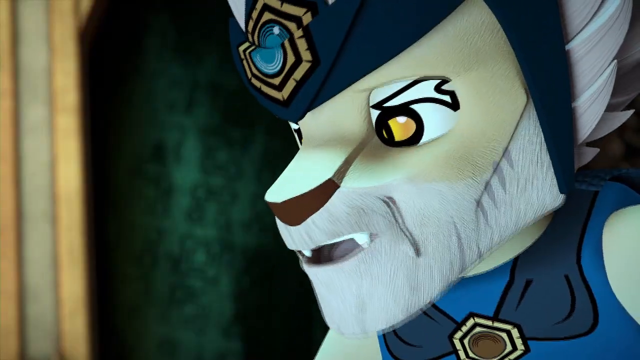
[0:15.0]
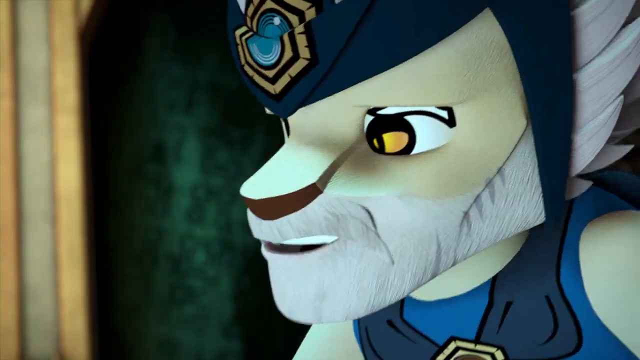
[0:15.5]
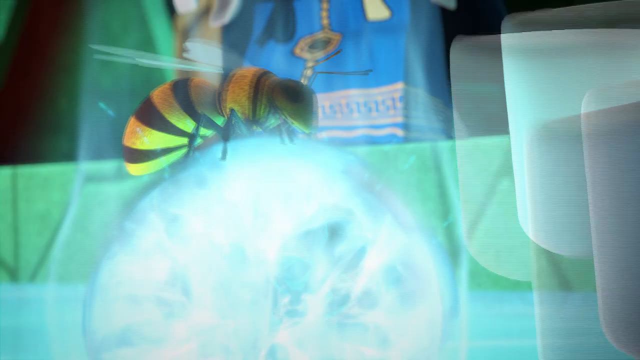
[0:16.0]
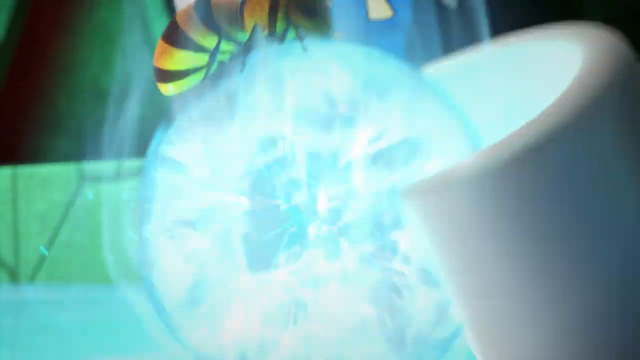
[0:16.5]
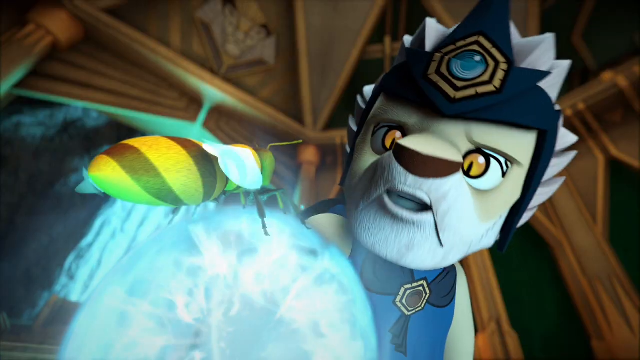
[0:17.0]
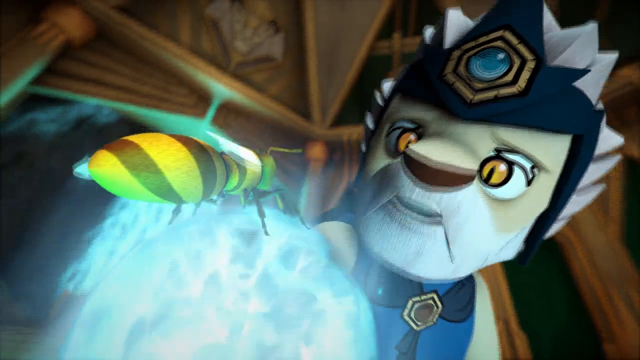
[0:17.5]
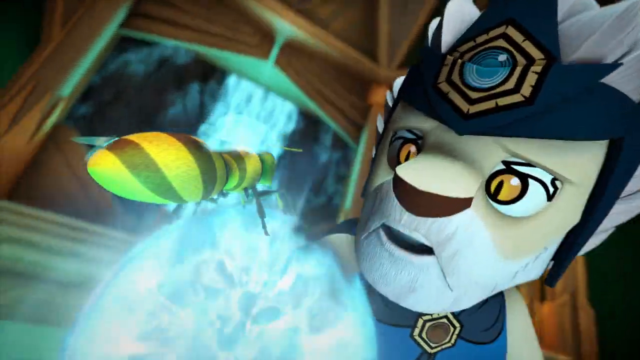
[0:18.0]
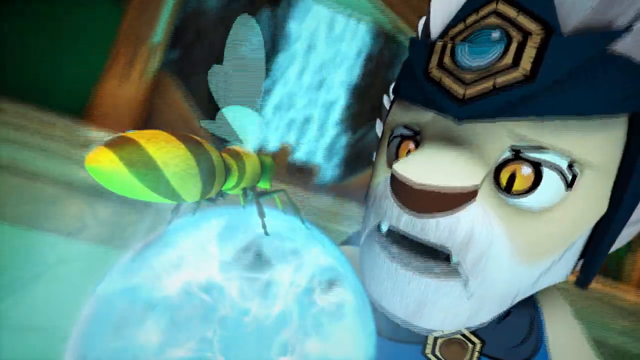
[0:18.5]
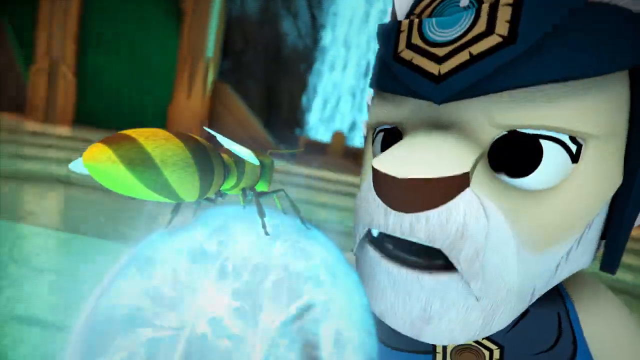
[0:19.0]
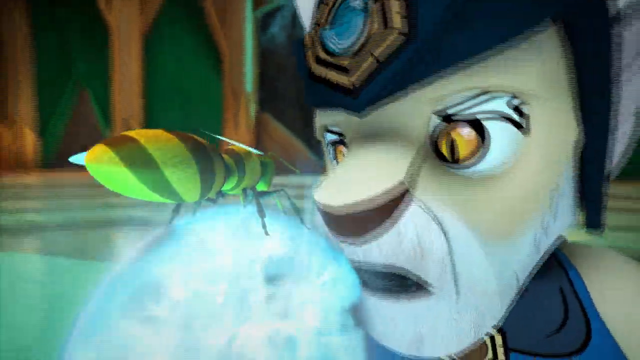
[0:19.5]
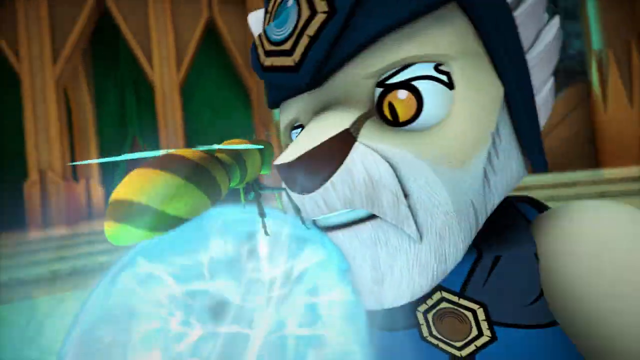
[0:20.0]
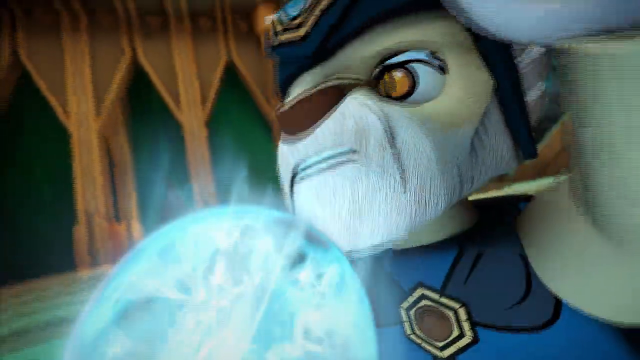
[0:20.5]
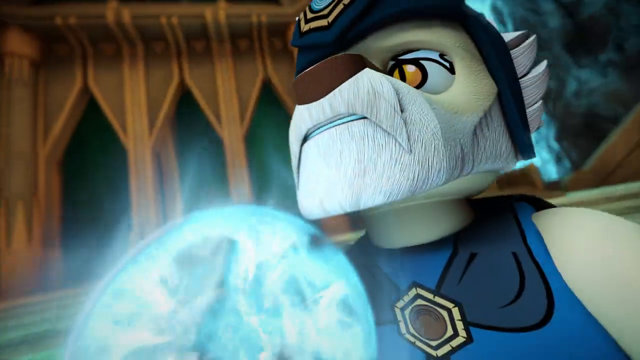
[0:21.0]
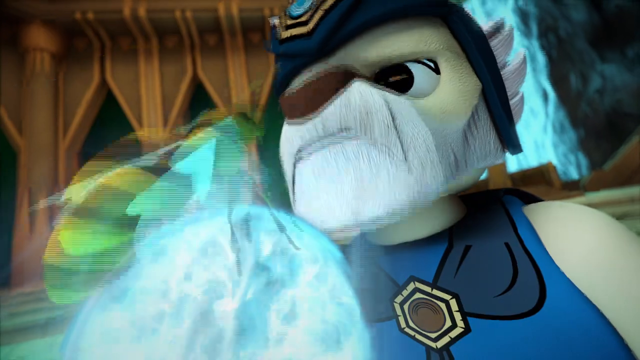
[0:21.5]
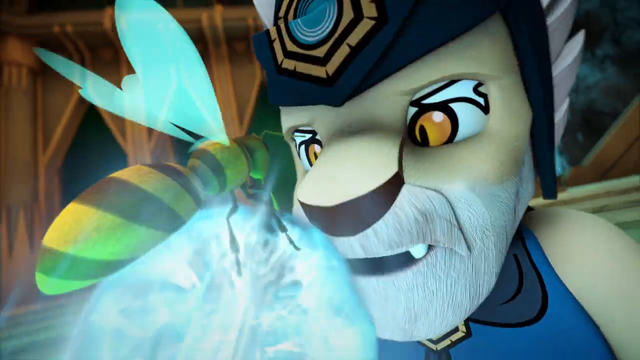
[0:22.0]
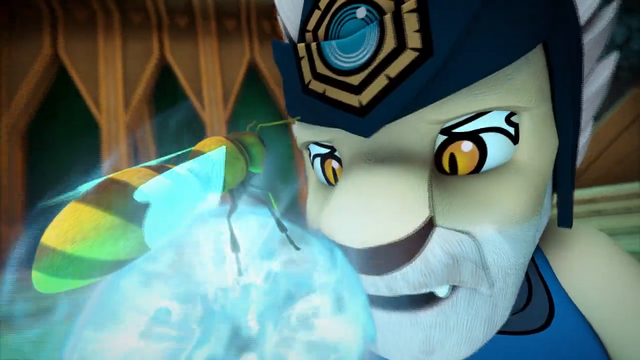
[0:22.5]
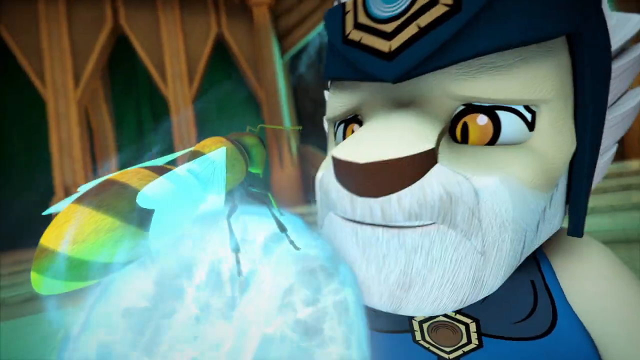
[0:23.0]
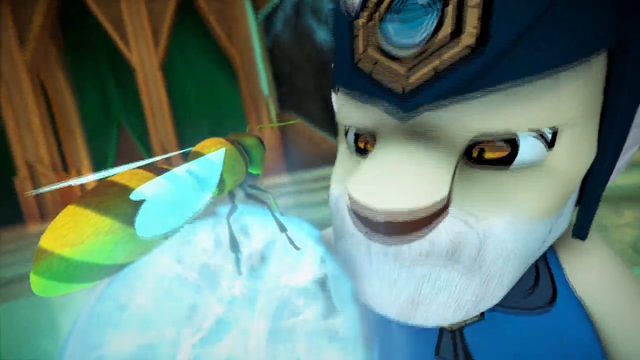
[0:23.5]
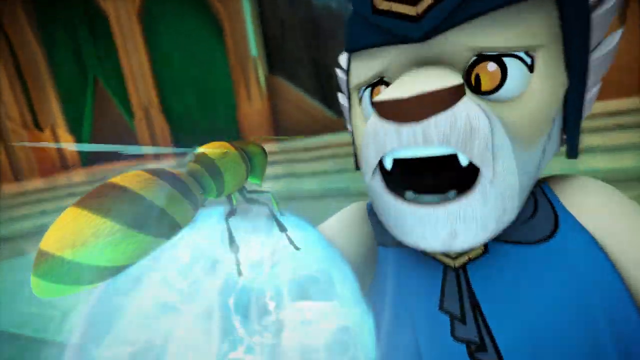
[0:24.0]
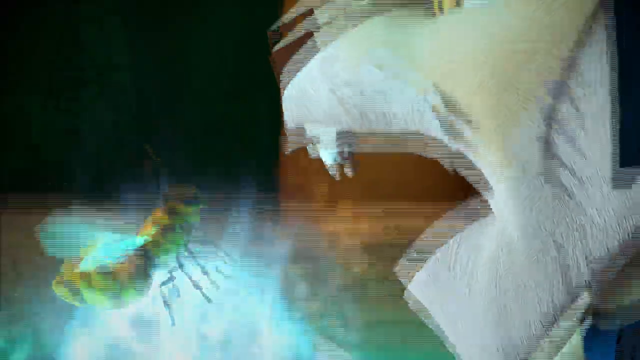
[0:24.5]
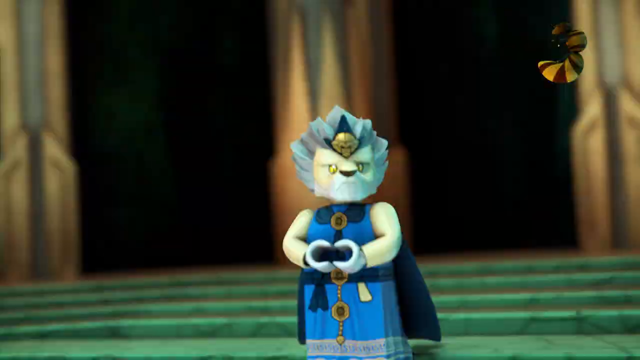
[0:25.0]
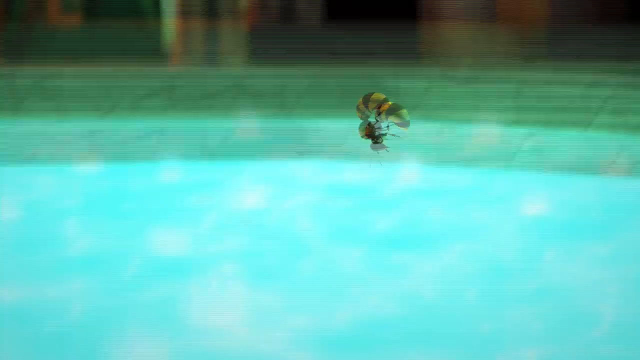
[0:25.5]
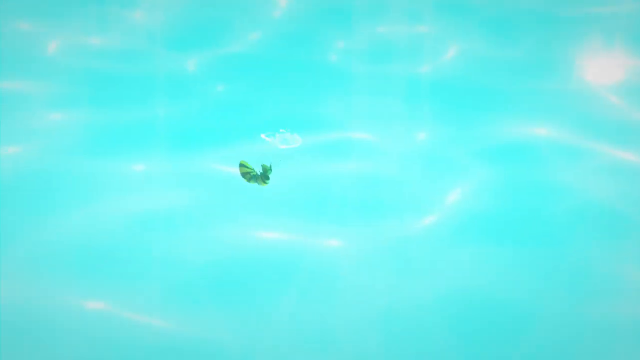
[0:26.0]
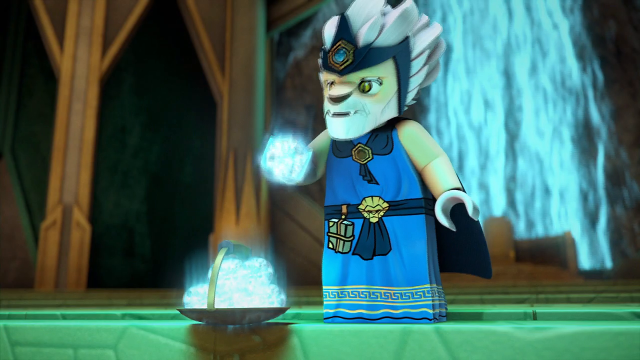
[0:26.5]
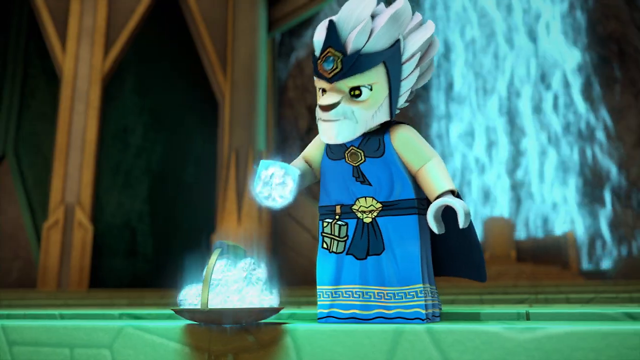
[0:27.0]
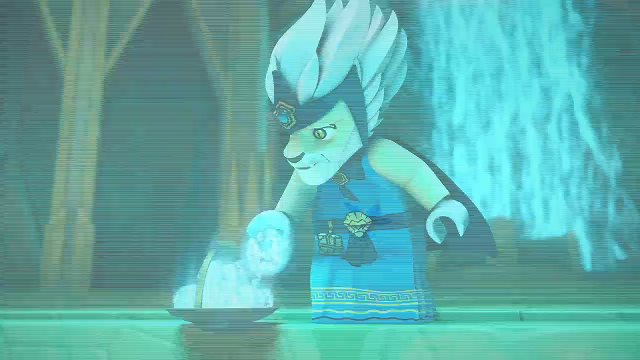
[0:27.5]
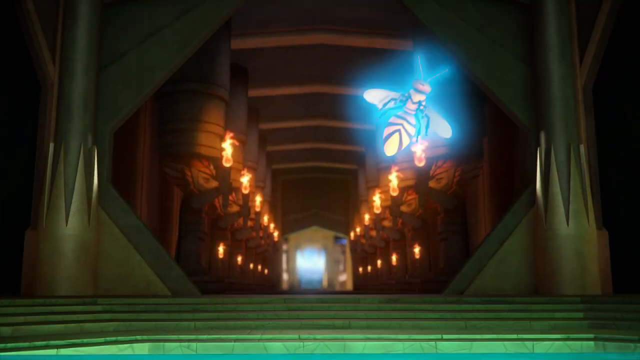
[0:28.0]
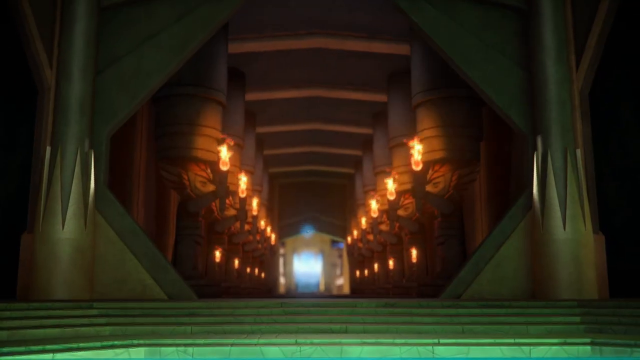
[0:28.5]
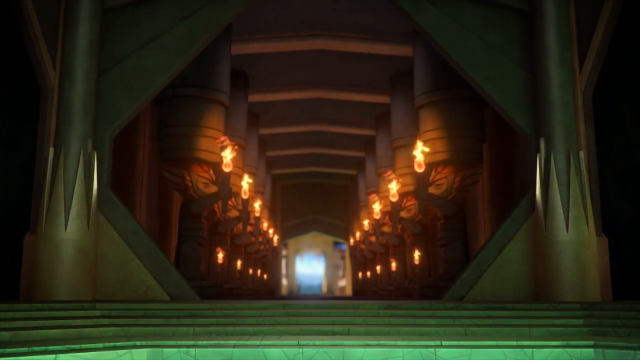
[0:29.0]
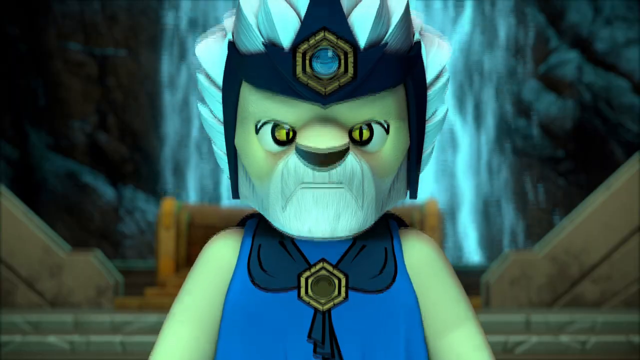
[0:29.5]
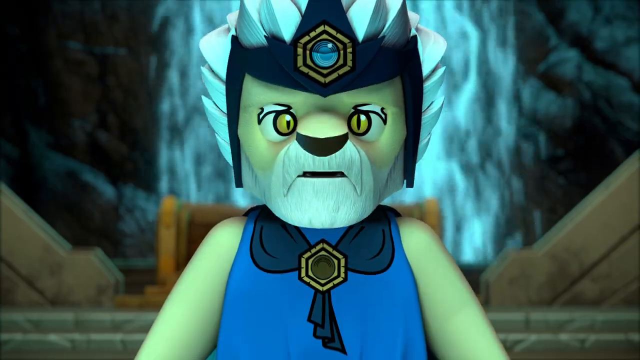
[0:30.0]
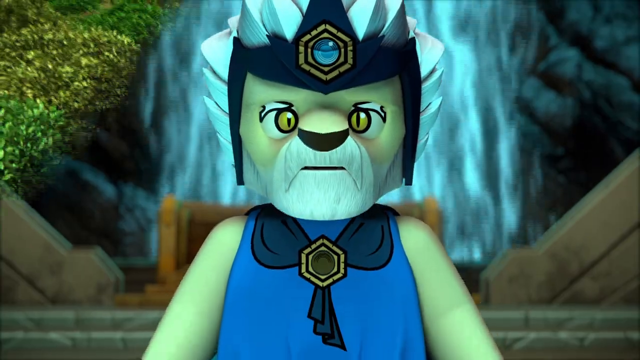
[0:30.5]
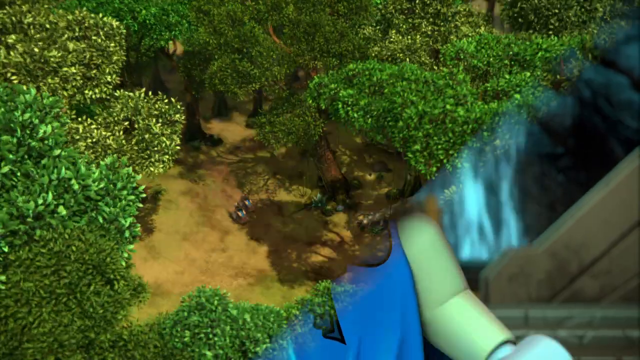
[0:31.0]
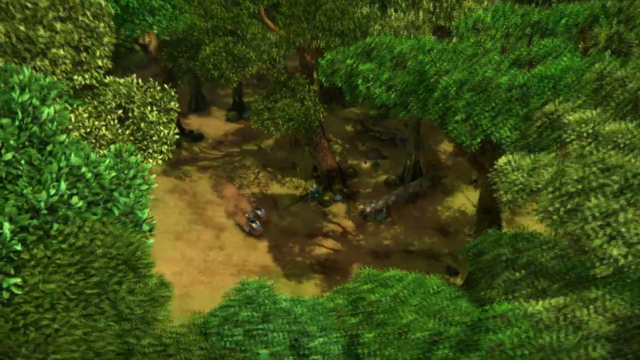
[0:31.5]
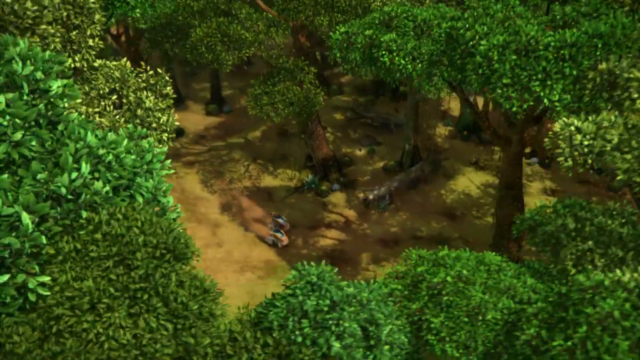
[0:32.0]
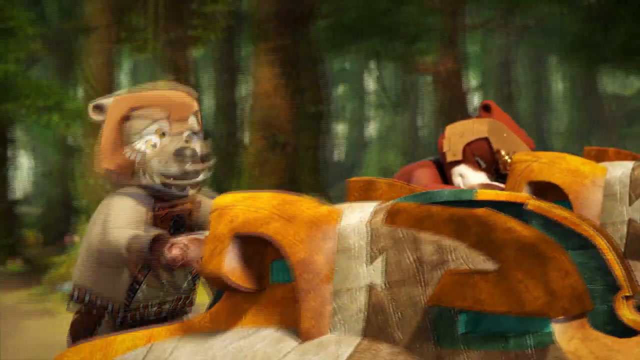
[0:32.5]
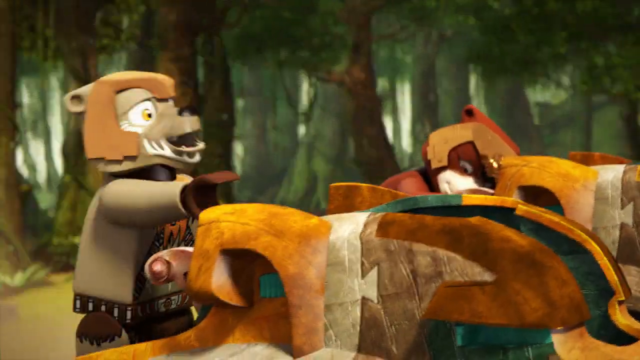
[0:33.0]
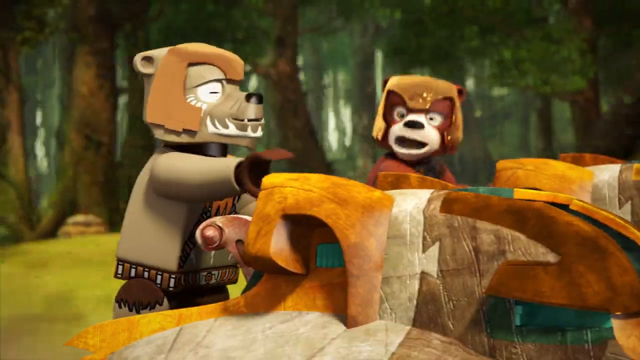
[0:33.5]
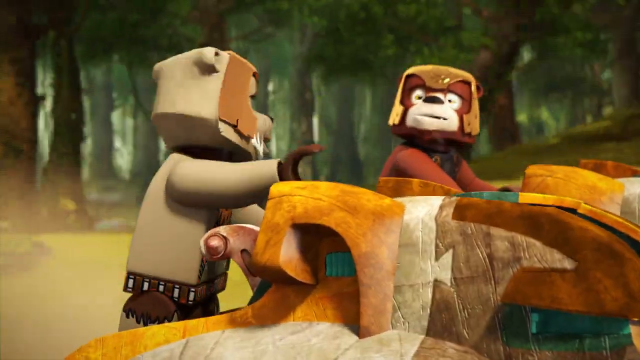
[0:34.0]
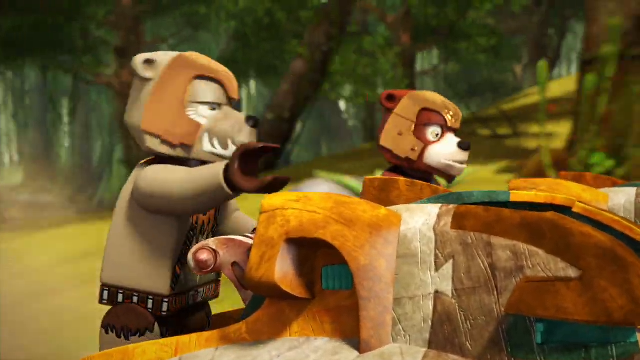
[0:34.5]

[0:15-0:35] The lion ruler, who has a white beard and wears a blue tunic, is standing on the edge of a large twelve-sided reflecting pool and has just finished giving the bee instructions. The bee flutters up and down from the crystal ball, which the Lion King takes back and places into a bowl holding several others, and he roars angrily at the bee. From the force of the roar, the bee does a backflip and lands in the reflecting pool as if blown back, but picks itself up and flies out of the chamber. Inside the chamber there is a large waterfall behind the king. In the final scene, two characters ride in on motorbikes, side by side, outdoors in the bush, looking like they are on patrol; they wear brown helmets.